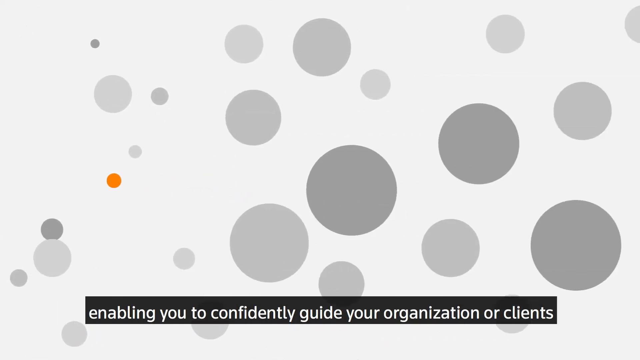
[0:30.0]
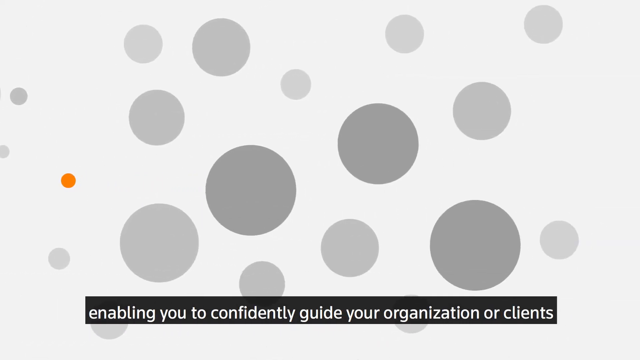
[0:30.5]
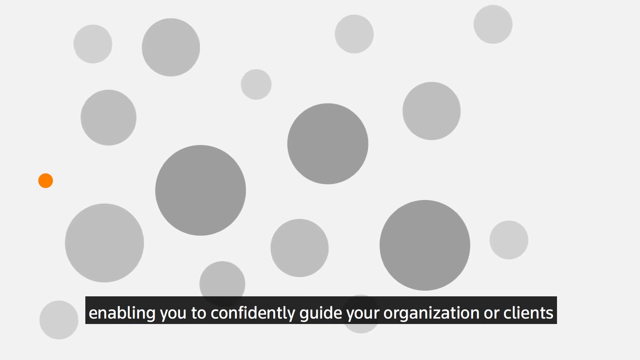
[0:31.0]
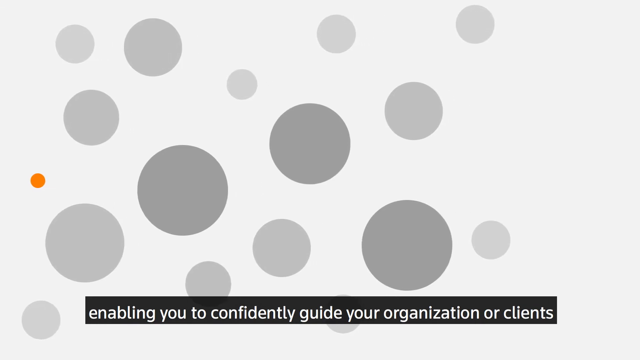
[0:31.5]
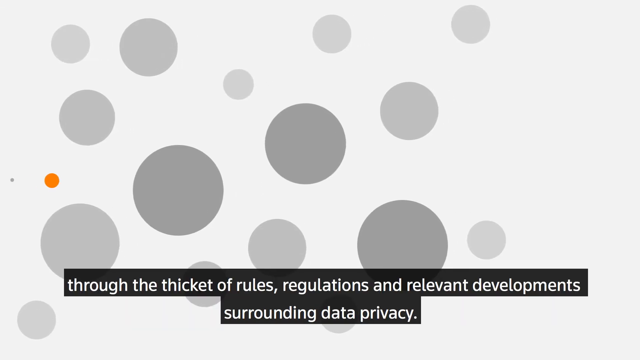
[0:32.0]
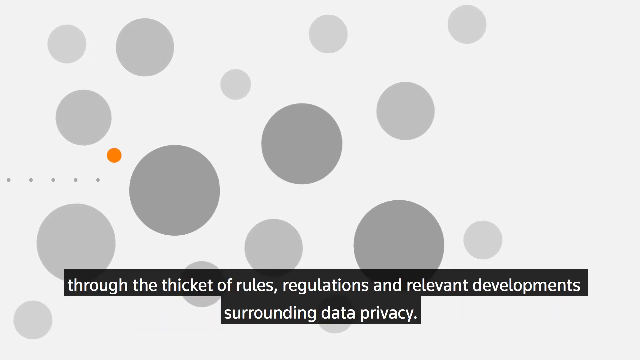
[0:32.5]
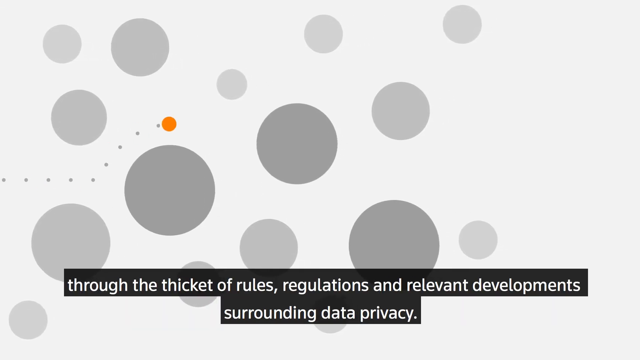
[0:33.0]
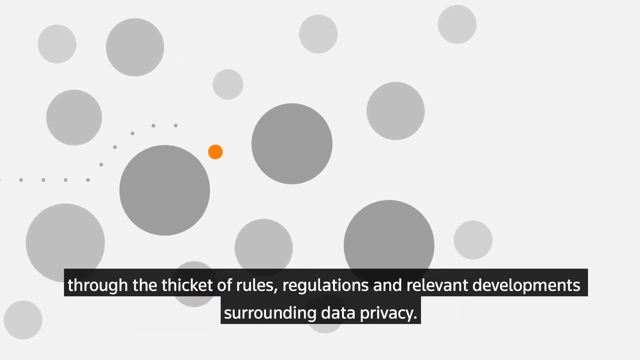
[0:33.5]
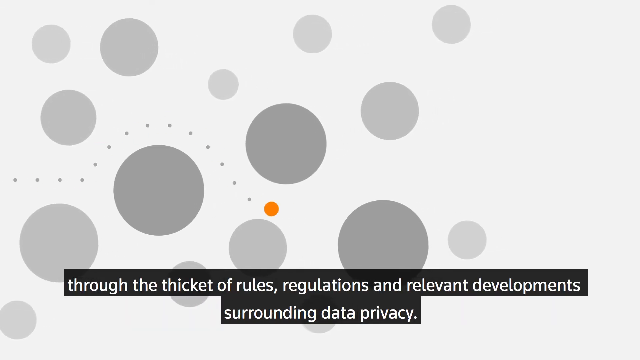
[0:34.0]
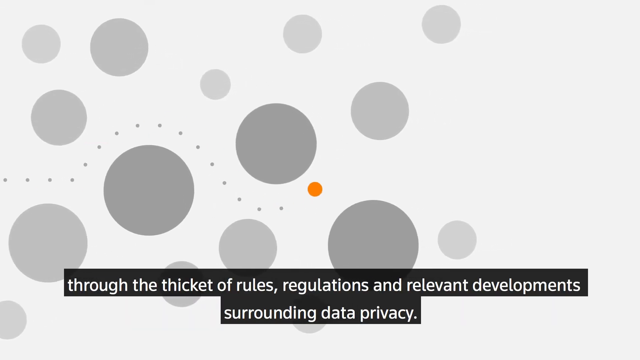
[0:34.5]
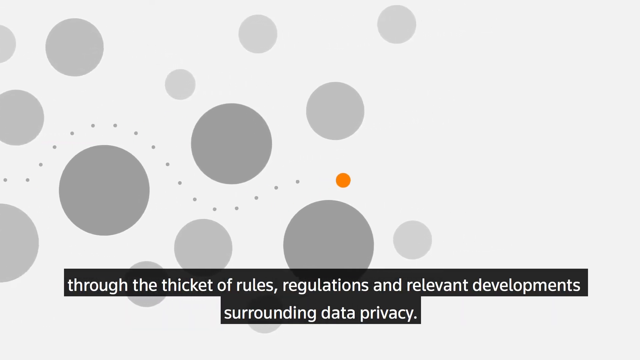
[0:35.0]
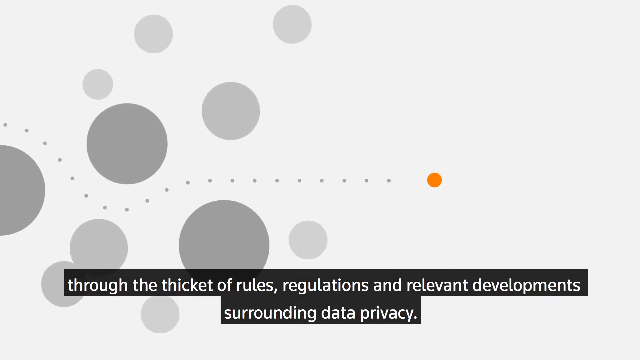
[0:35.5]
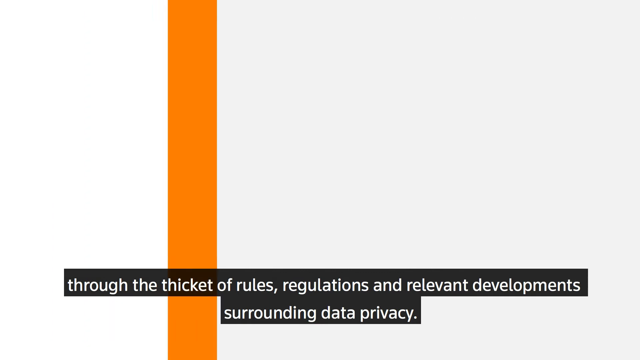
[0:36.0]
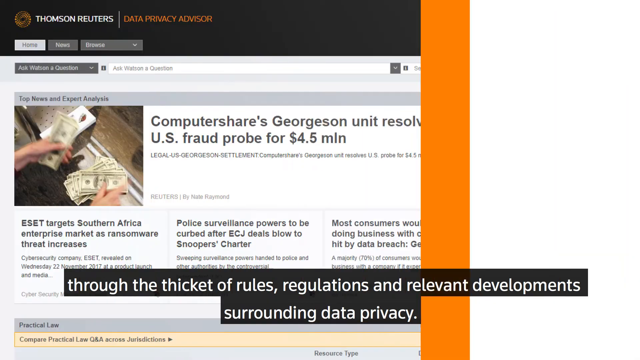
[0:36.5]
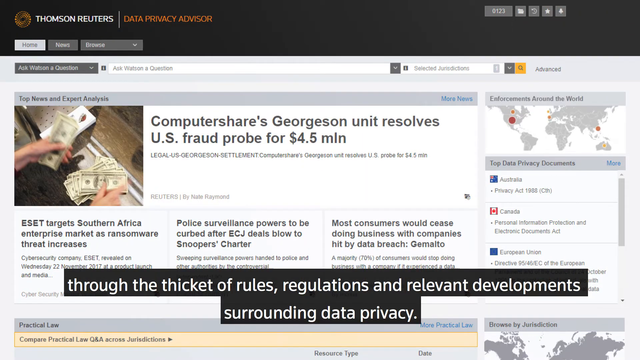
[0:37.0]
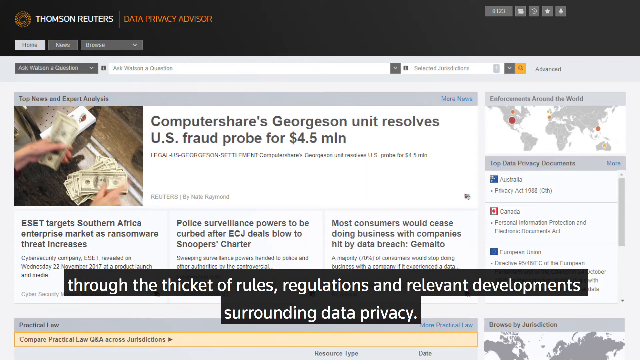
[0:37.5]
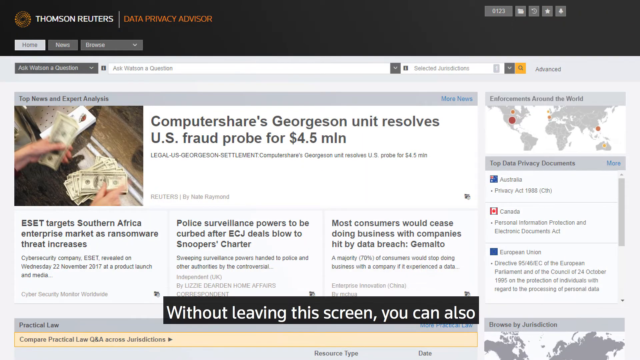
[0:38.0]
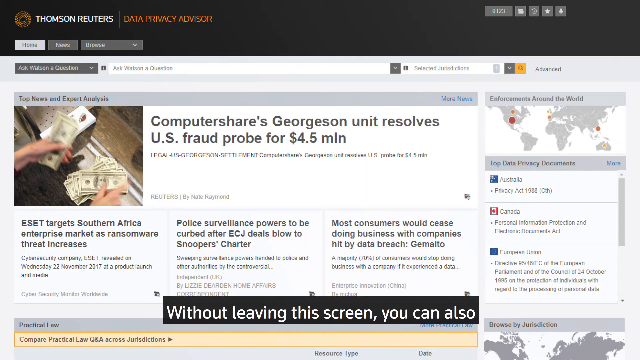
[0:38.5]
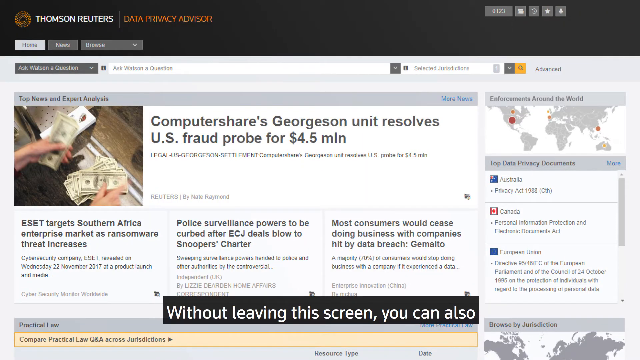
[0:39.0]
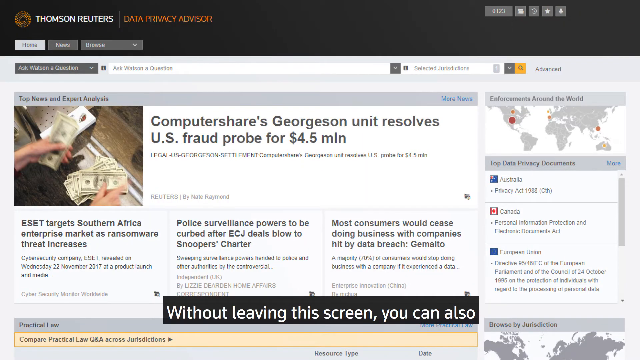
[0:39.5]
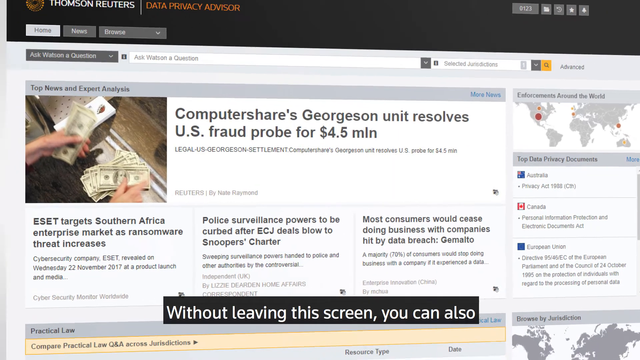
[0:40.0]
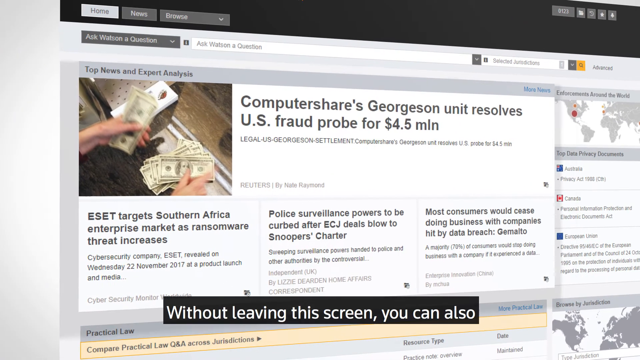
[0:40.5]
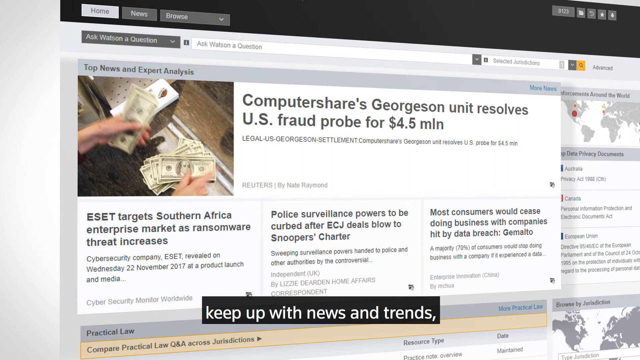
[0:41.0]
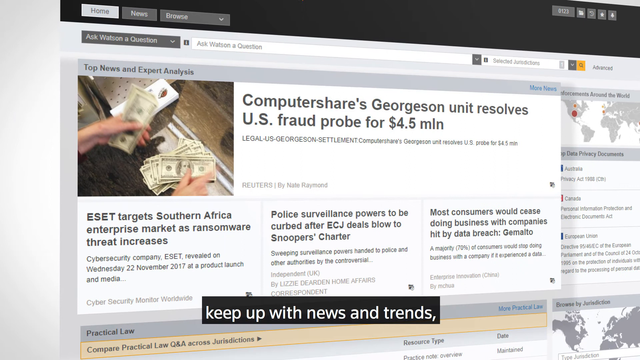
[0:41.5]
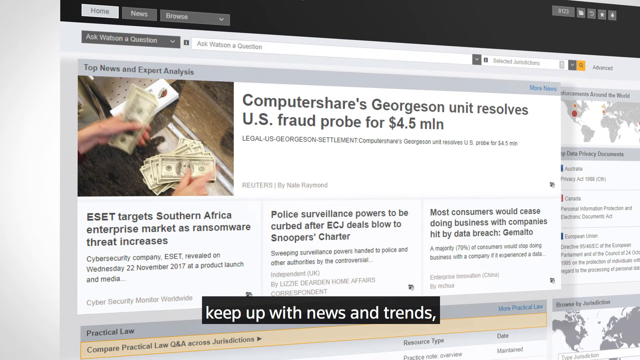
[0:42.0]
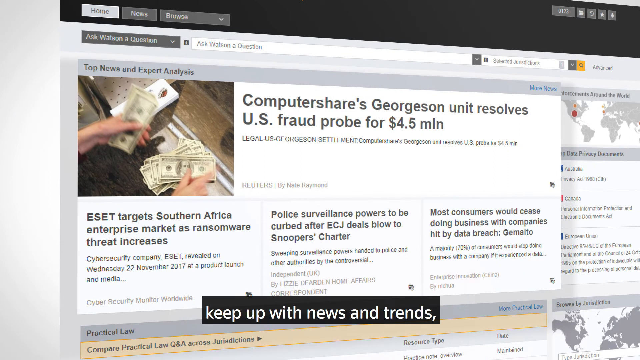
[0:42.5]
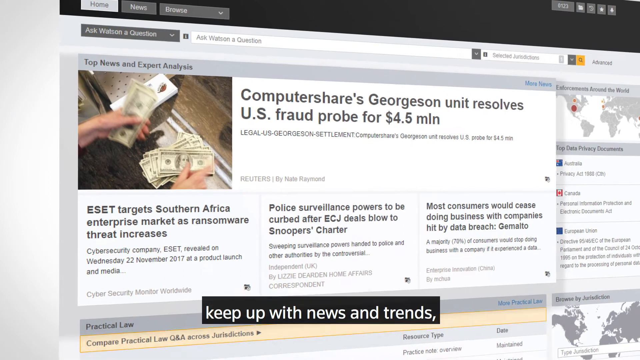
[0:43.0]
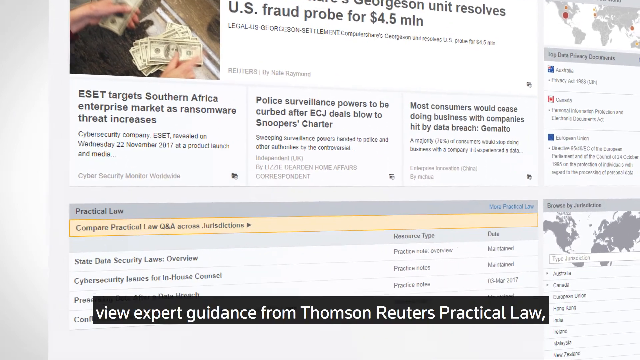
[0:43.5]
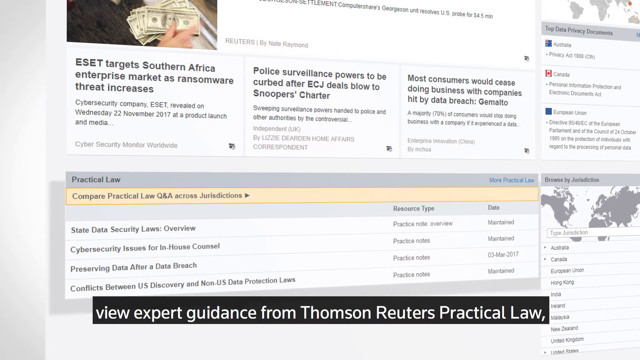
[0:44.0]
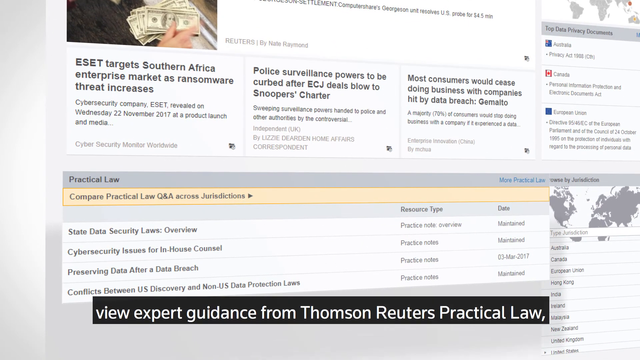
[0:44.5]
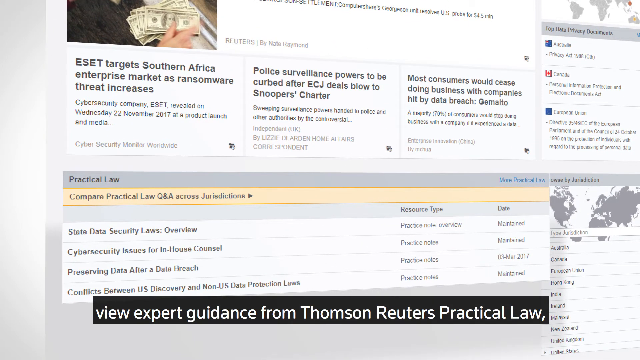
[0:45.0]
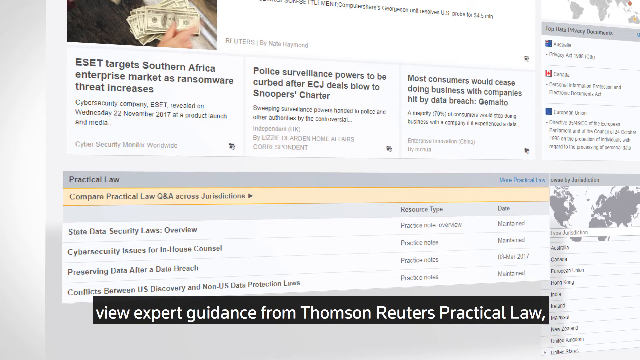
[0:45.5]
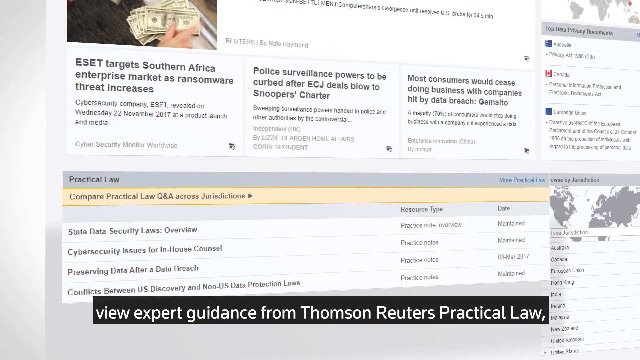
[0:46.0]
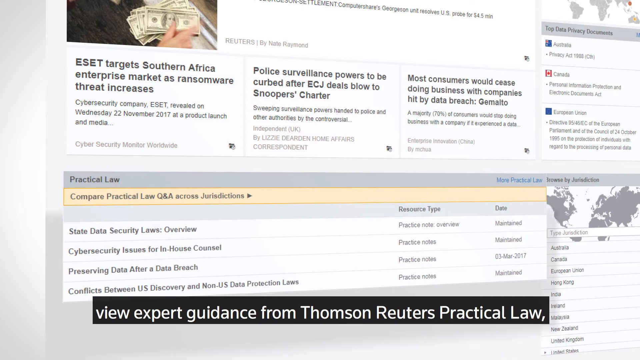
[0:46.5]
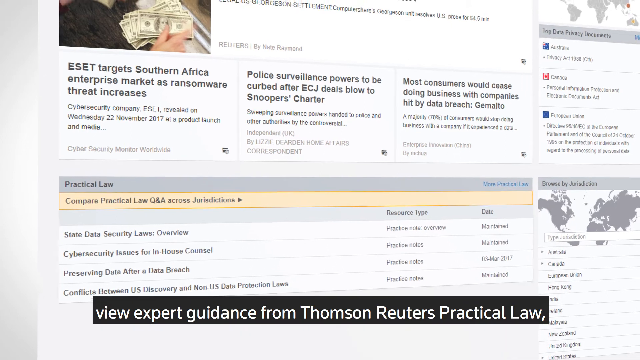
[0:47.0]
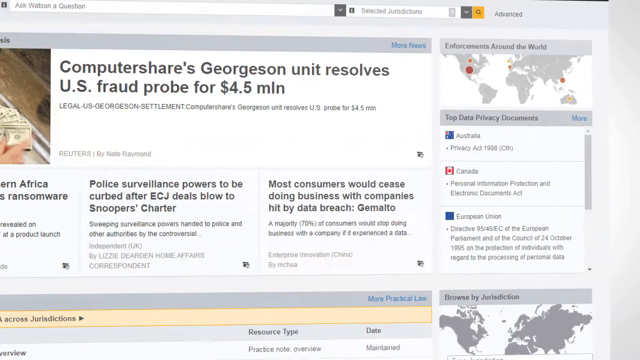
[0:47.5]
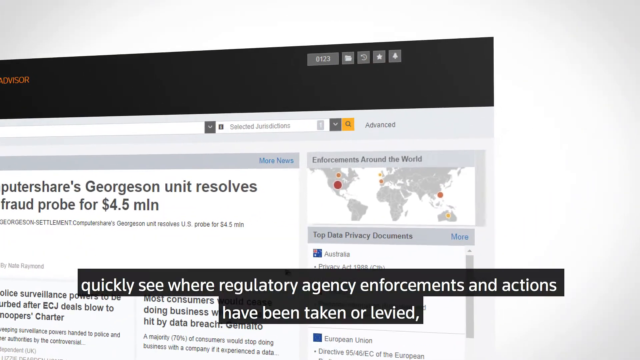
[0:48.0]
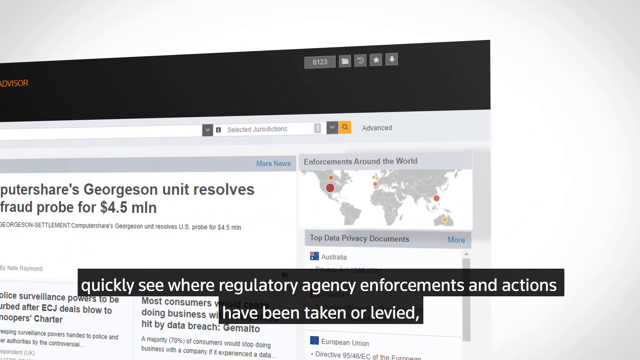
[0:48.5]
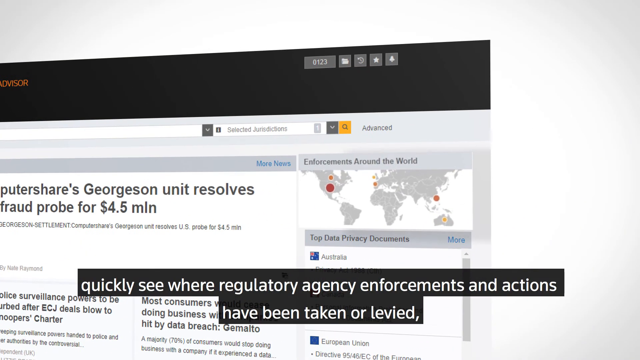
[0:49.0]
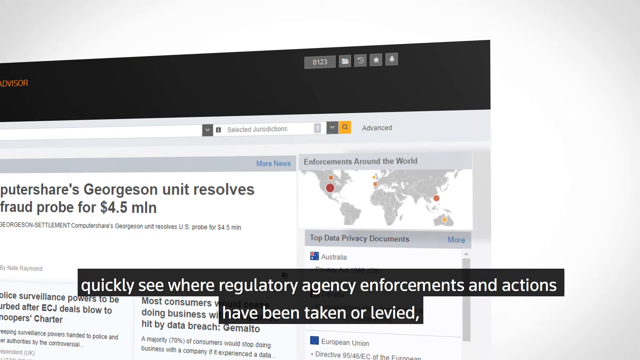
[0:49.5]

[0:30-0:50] A little orange dot travels among grey dots, apparently showing a journey through the web page, and then the Thompson web page appears again as the video navigates it. The page has text that says "top news and expert analysis" and a couple of articles. Below is a title that says "practical law" and "compare practical law Q&A across jurisdictions", followed by "state data security laws overview" with its resource type and date, and then "cyber security issues for in-house counsel", "preserving data after a data breach" and "conflicts between US discovery and non-US data protection laws." A map reads "enforcements around the world" and has a couple of locations pinpointed on different continents.